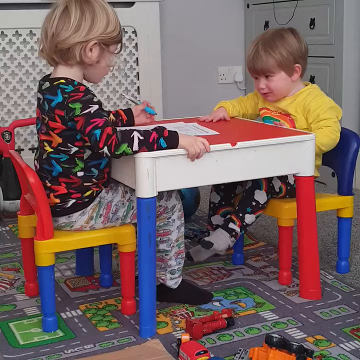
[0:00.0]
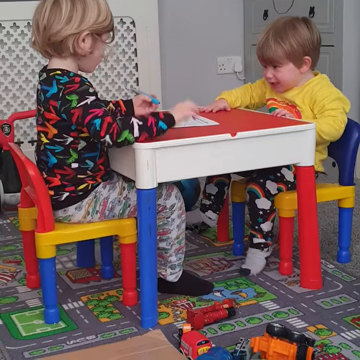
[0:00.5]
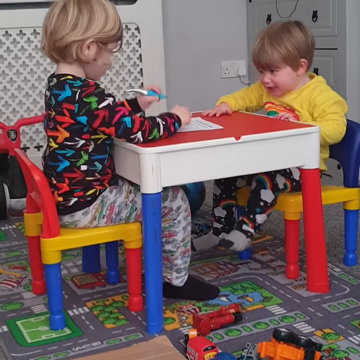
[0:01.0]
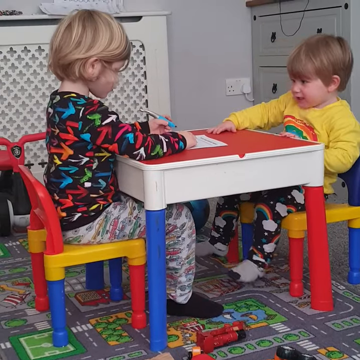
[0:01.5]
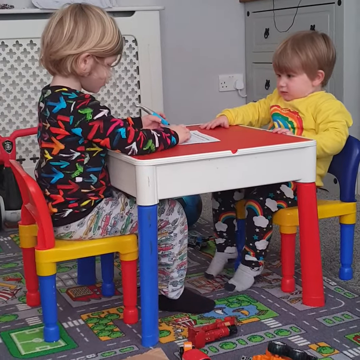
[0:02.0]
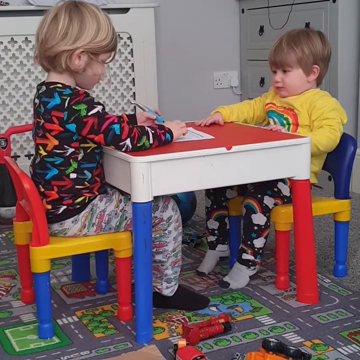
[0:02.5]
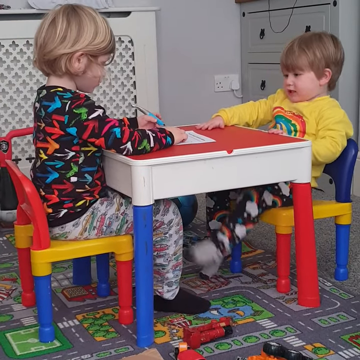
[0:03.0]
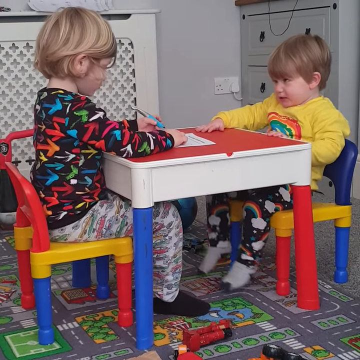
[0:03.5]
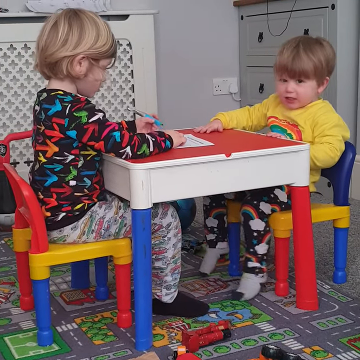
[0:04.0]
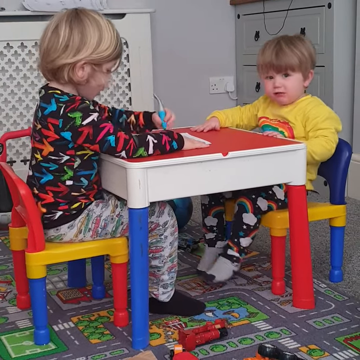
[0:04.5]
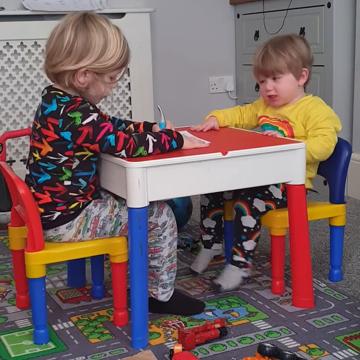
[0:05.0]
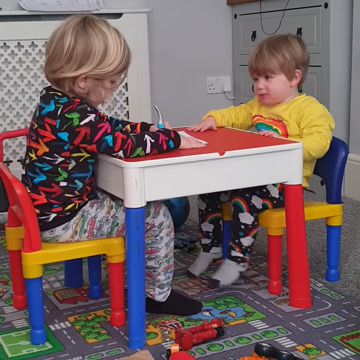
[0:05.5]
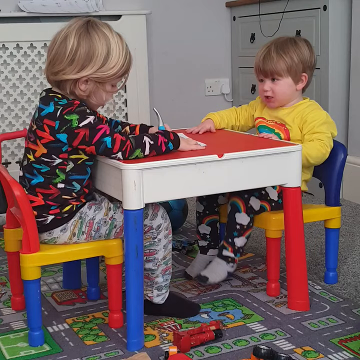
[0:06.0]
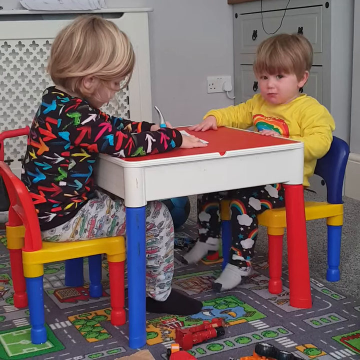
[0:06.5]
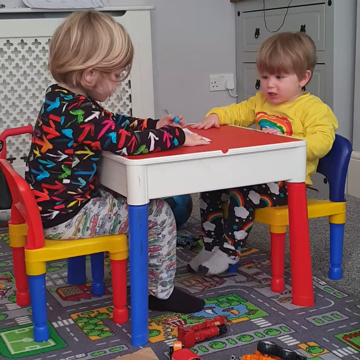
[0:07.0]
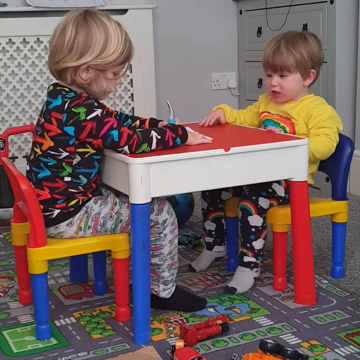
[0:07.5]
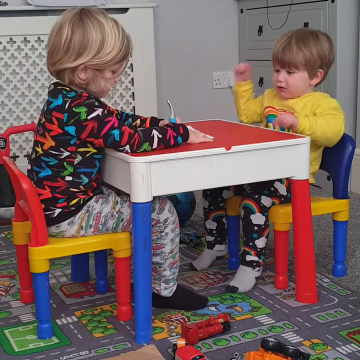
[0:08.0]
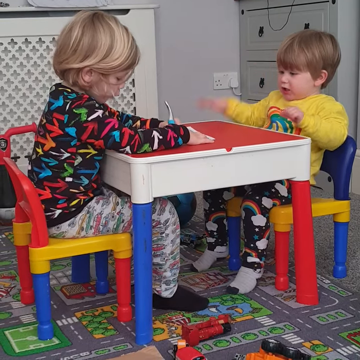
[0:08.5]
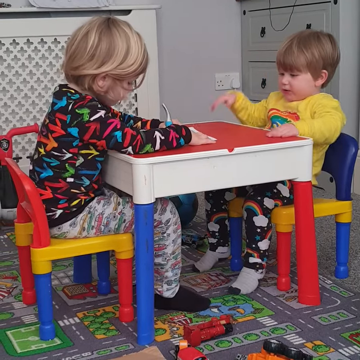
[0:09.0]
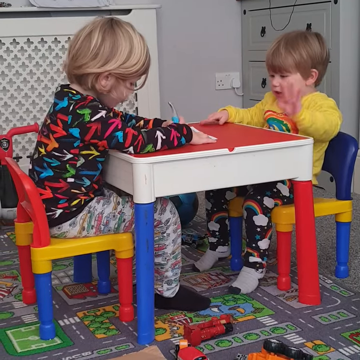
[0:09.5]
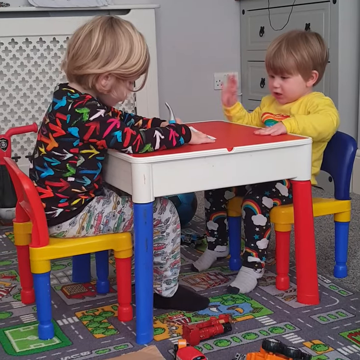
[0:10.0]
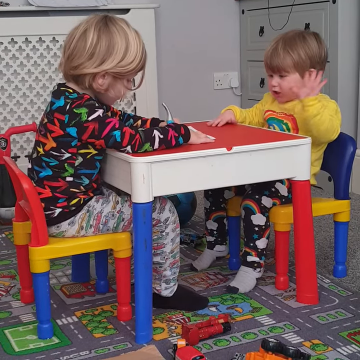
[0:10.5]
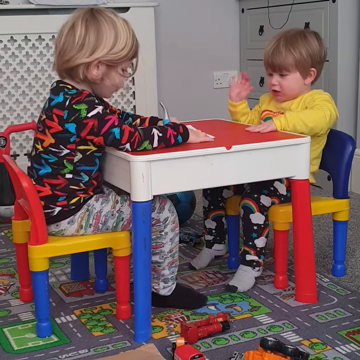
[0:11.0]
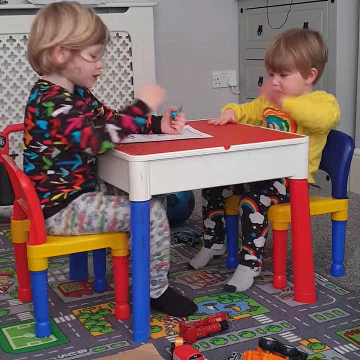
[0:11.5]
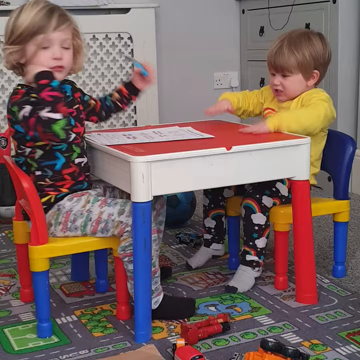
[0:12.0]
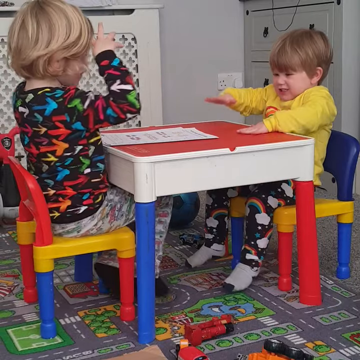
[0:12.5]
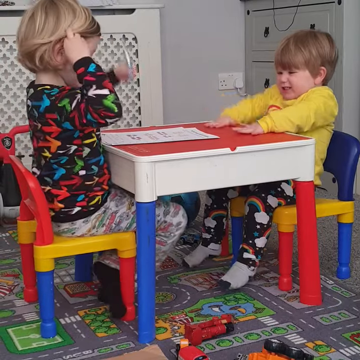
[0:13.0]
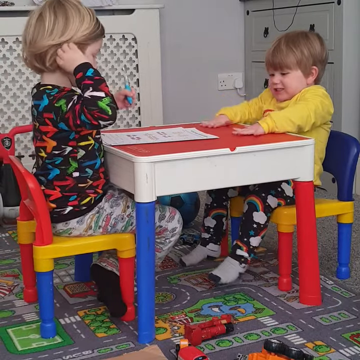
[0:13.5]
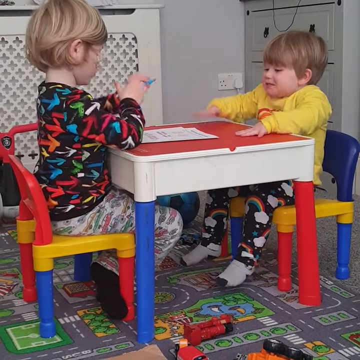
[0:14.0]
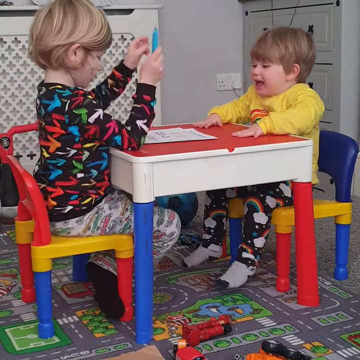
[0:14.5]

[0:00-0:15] Two individuals sit at a table indoors. The older one appears to be coloring with some type of marker or crayon, while the younger one also sits at the table but has no crayon or piece of paper. Both appear to be wearing pajamas, though not necessarily a matching set. The table has a red top, and its legs are a mix of red and blue; the chairs they sit on are the same, with red and blue legs and a yellow base. A gray dresser and a white heater are visible in the scene. Below their feet is a rug with multiple streets on it, and some toys are on the ground as well.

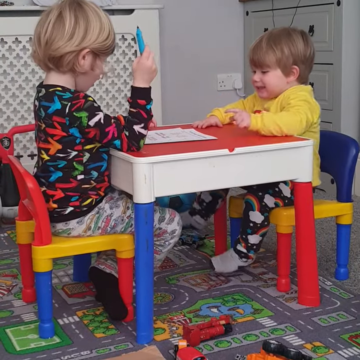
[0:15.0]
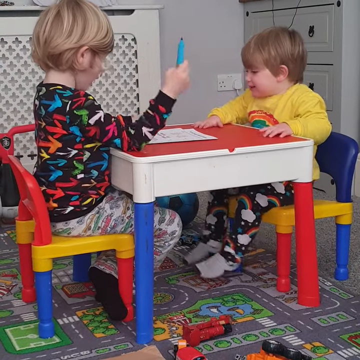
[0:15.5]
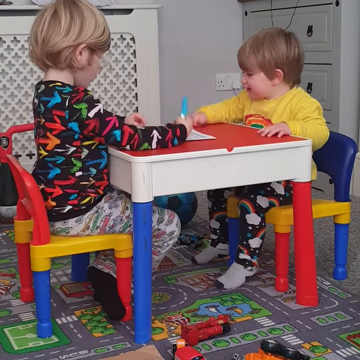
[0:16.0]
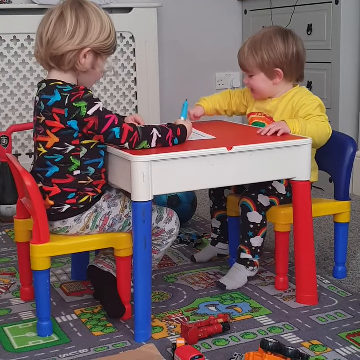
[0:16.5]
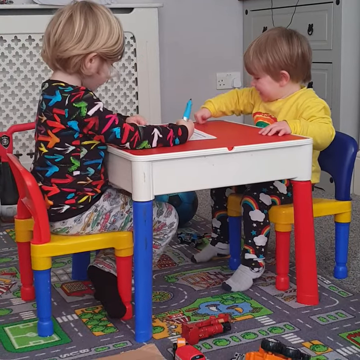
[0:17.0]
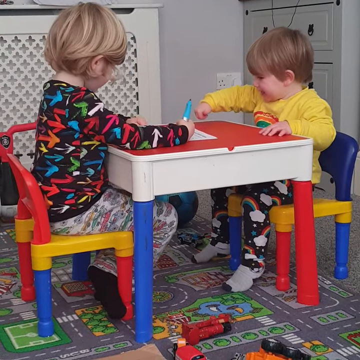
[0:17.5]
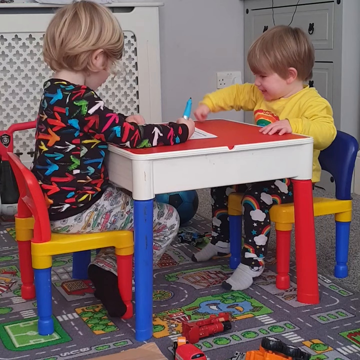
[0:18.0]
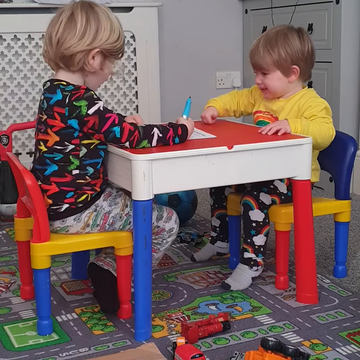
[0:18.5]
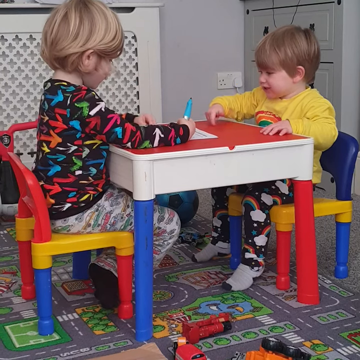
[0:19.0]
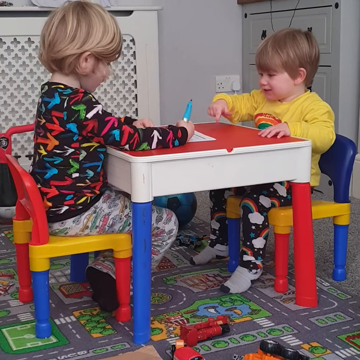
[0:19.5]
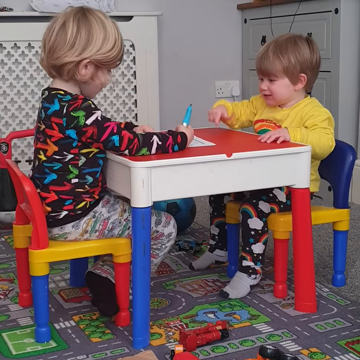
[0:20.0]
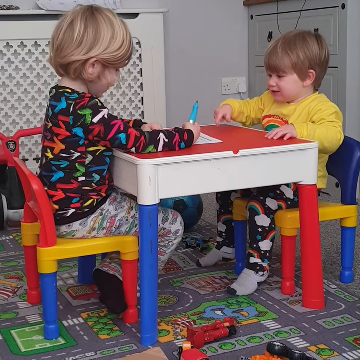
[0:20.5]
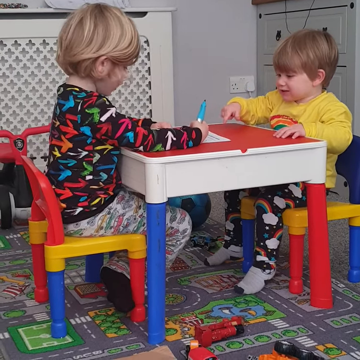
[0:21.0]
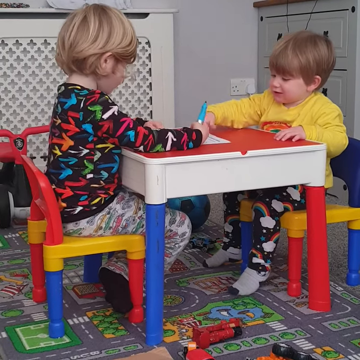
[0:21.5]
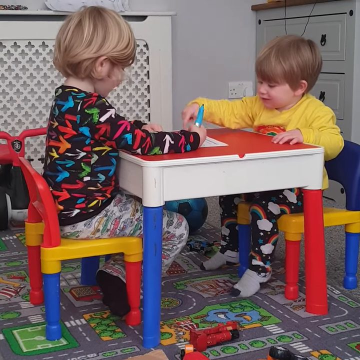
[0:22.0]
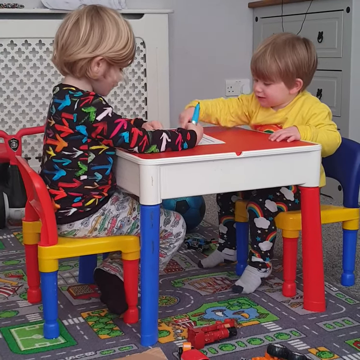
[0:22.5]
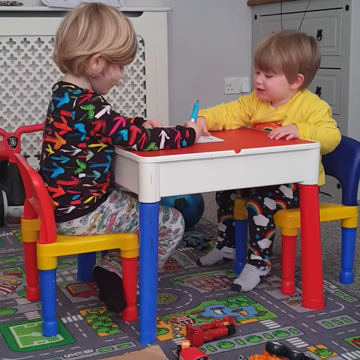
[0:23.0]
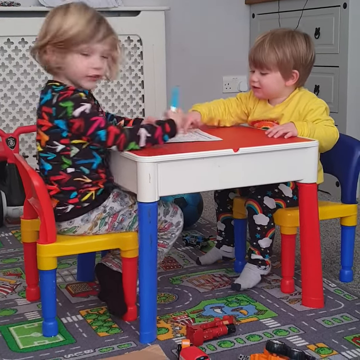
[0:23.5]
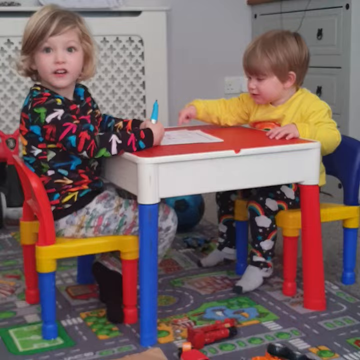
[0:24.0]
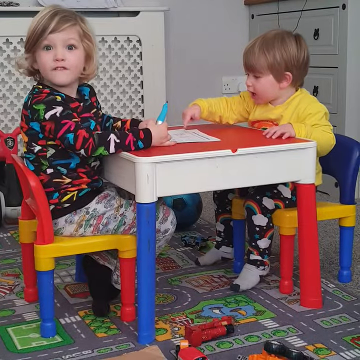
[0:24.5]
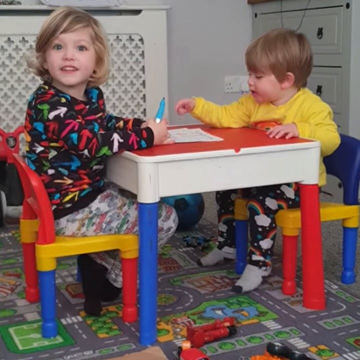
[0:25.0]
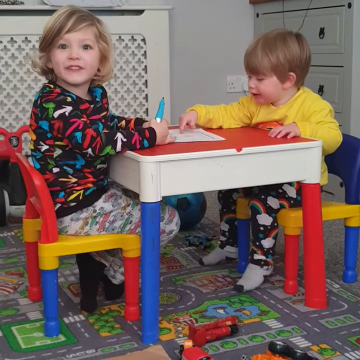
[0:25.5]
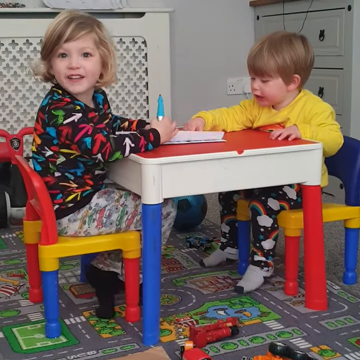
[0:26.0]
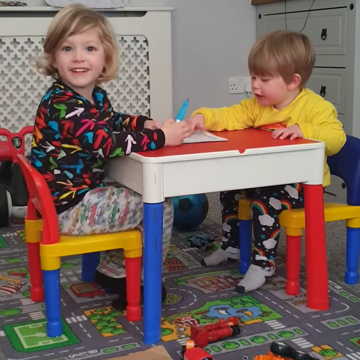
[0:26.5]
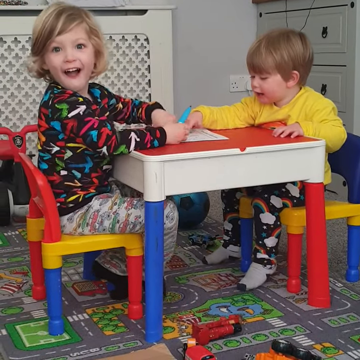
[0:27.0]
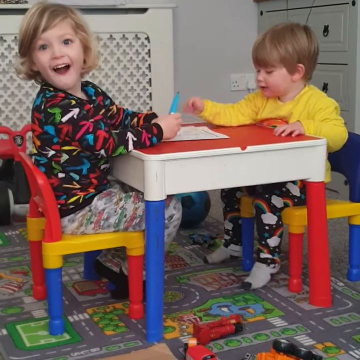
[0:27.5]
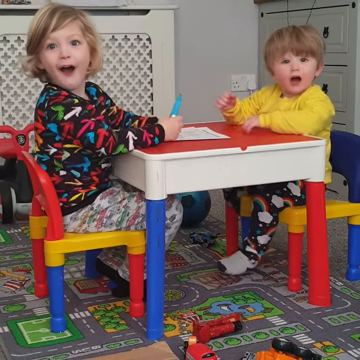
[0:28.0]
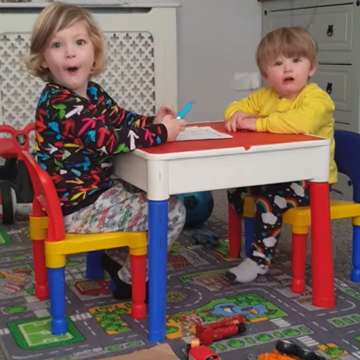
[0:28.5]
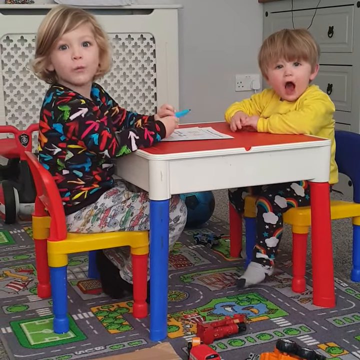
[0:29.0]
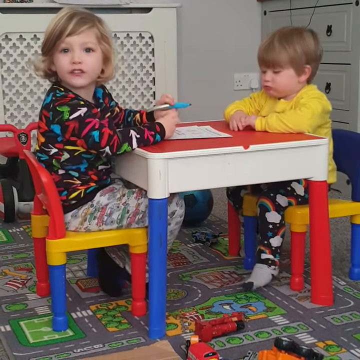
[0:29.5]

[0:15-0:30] The two children continue to play at the table. The younger one taps his finger on the table and then moves his finger to the paper. As he does this, the older child looks at an adult, parent or whoever is recording with a look of amusement, possibly awe, on their face. The older child appears to say something as well, perhaps about the younger child tapping on the paper while they draw.